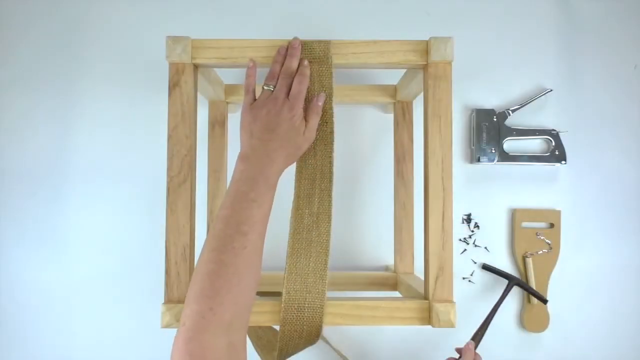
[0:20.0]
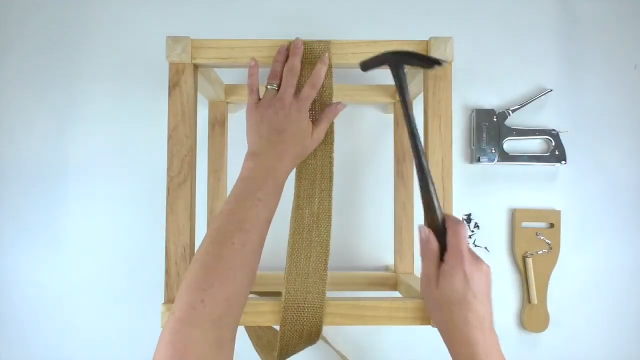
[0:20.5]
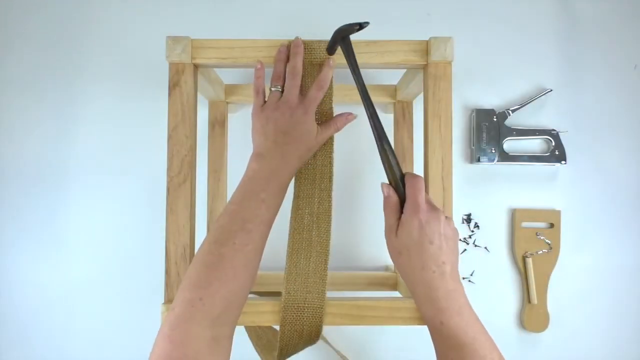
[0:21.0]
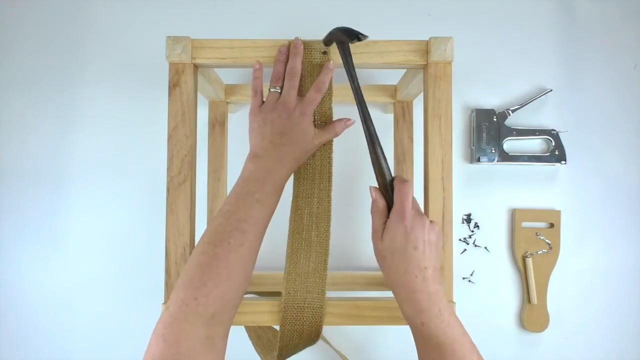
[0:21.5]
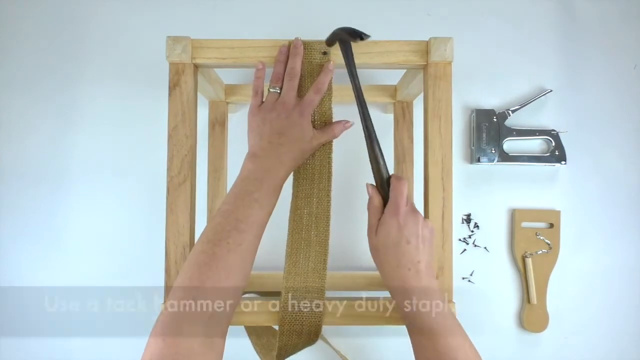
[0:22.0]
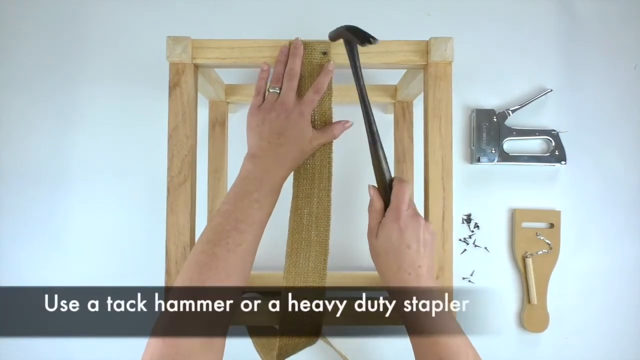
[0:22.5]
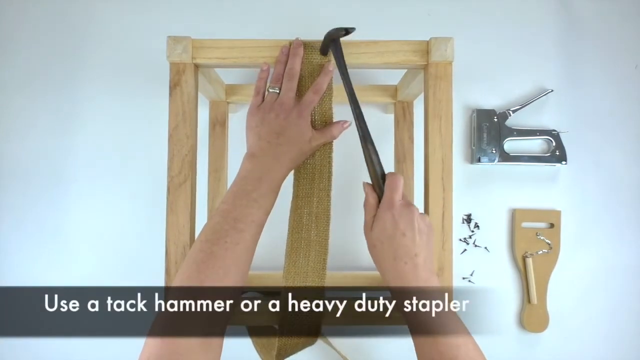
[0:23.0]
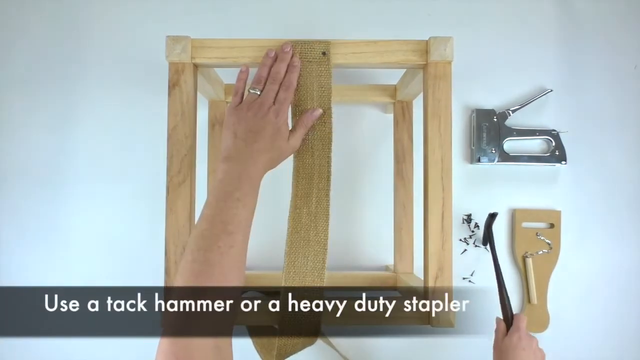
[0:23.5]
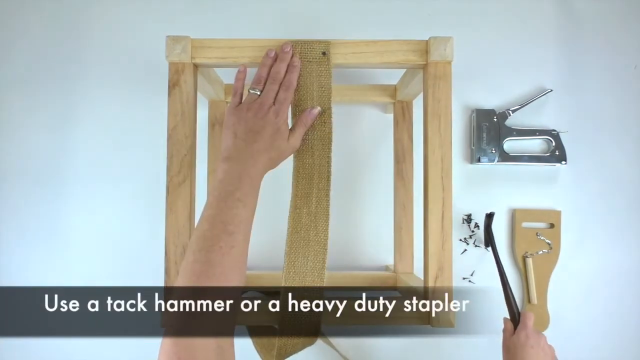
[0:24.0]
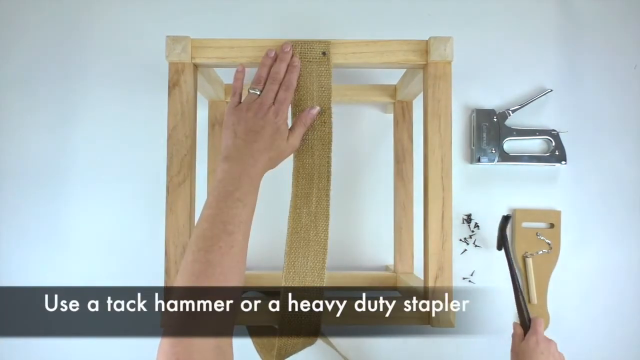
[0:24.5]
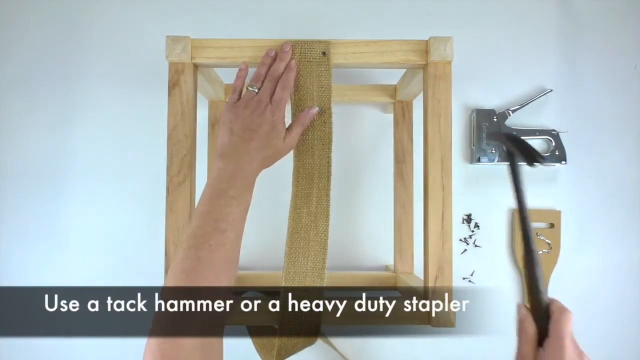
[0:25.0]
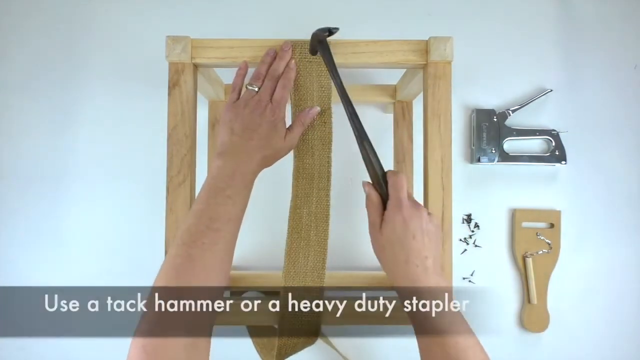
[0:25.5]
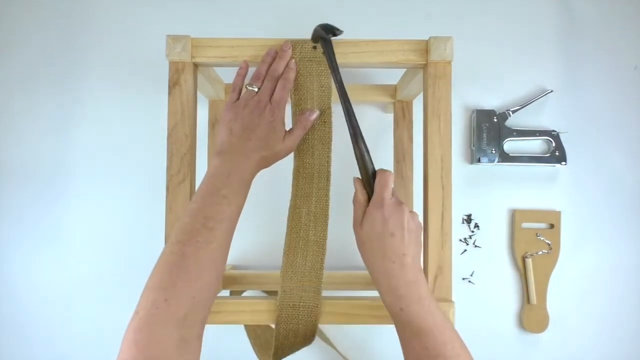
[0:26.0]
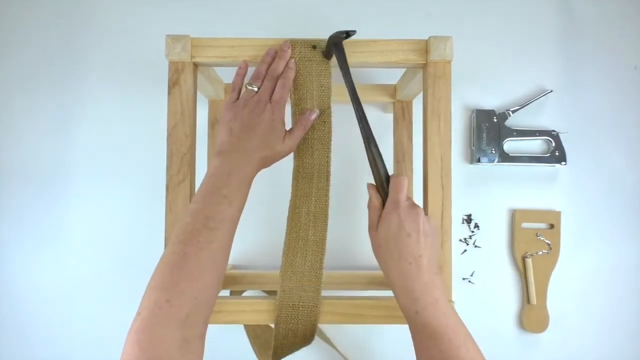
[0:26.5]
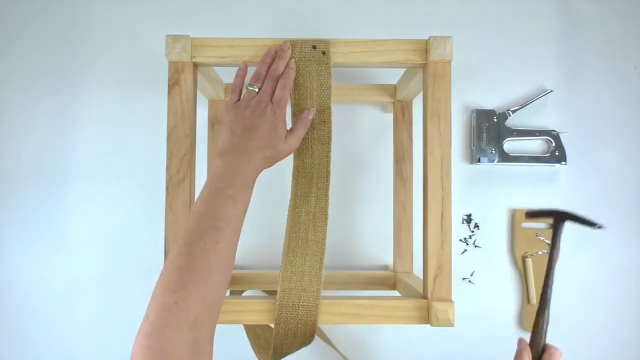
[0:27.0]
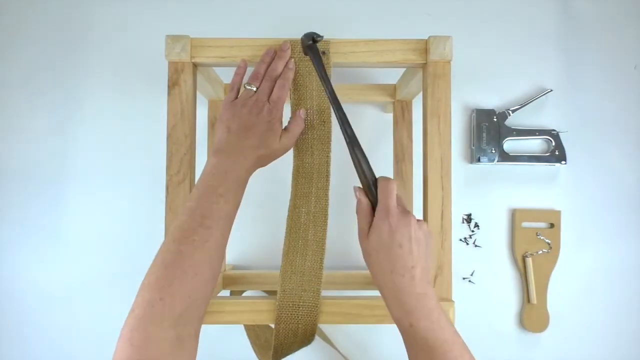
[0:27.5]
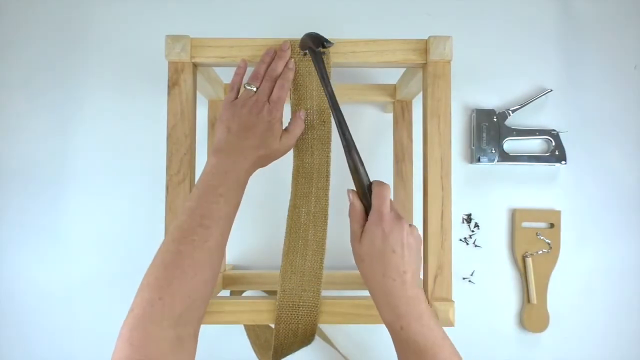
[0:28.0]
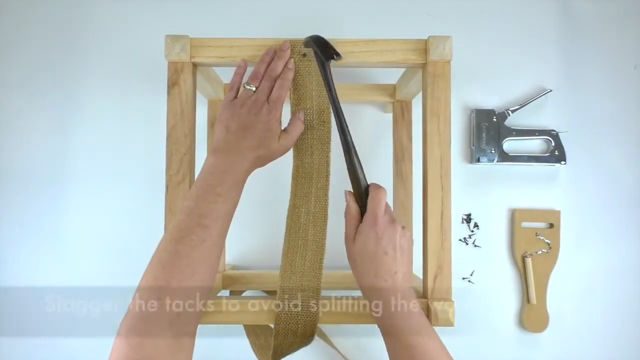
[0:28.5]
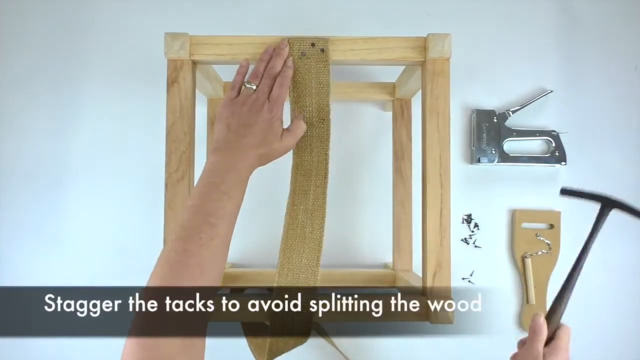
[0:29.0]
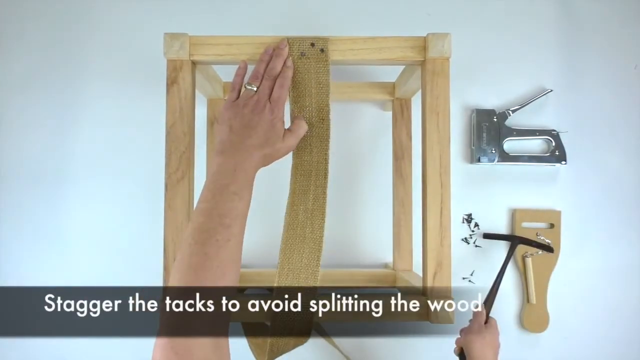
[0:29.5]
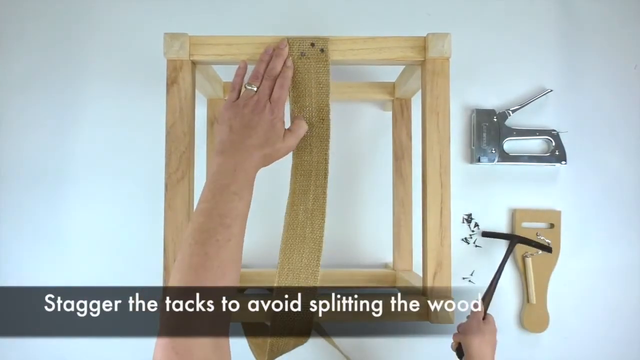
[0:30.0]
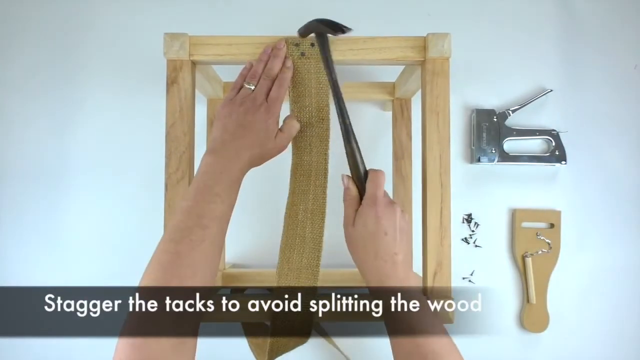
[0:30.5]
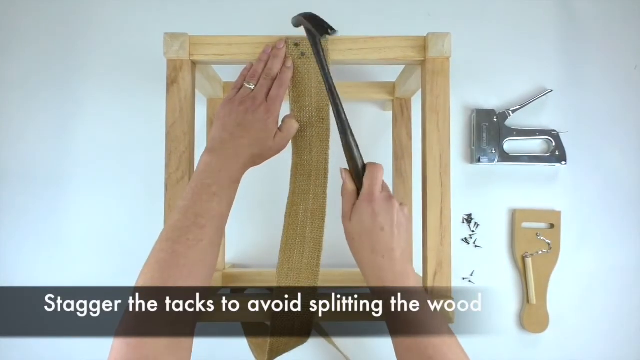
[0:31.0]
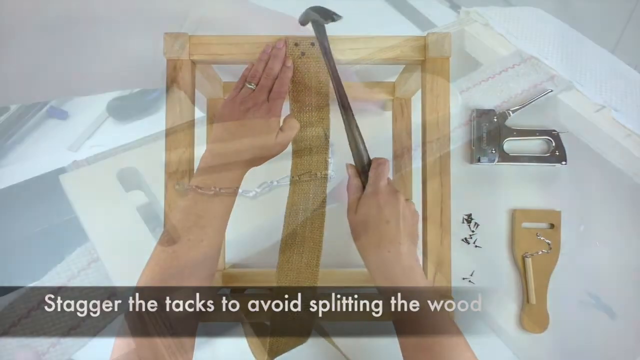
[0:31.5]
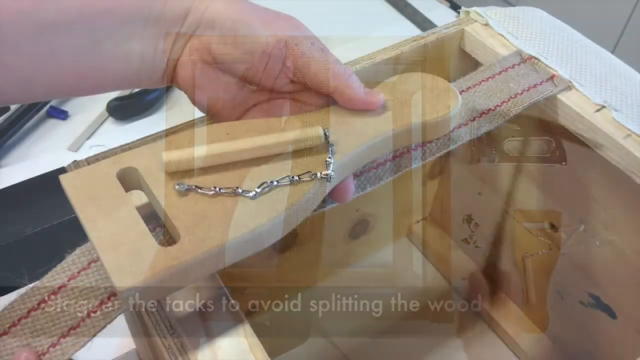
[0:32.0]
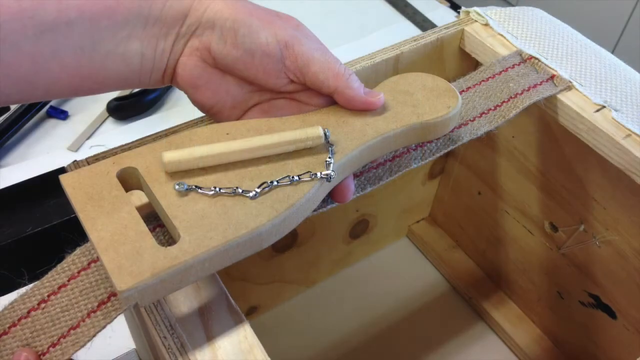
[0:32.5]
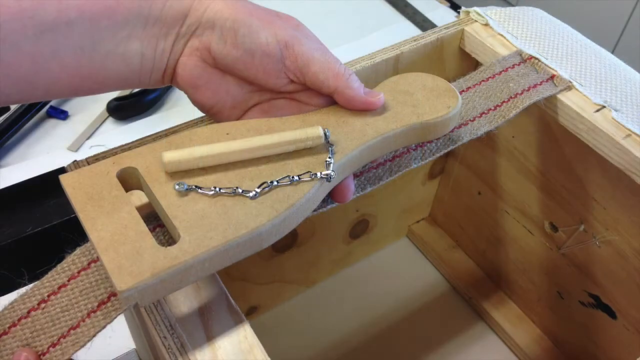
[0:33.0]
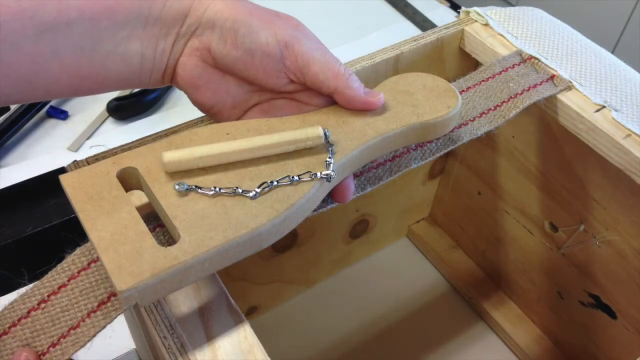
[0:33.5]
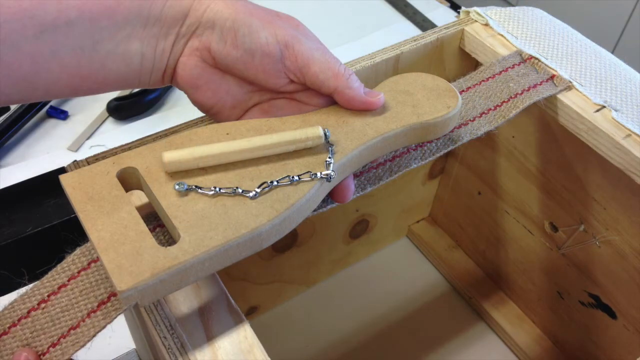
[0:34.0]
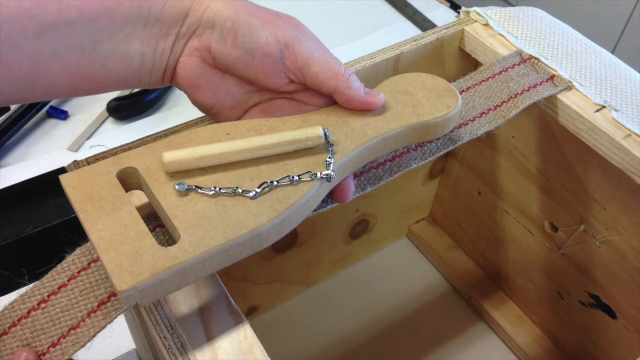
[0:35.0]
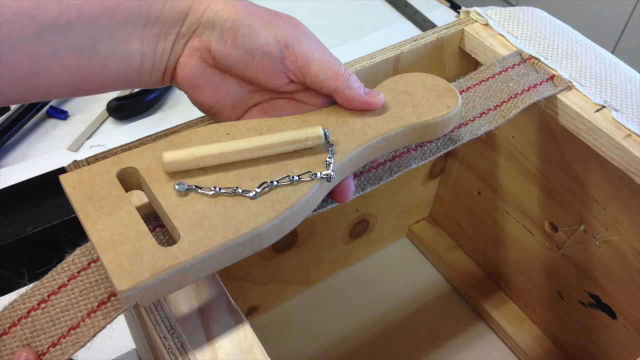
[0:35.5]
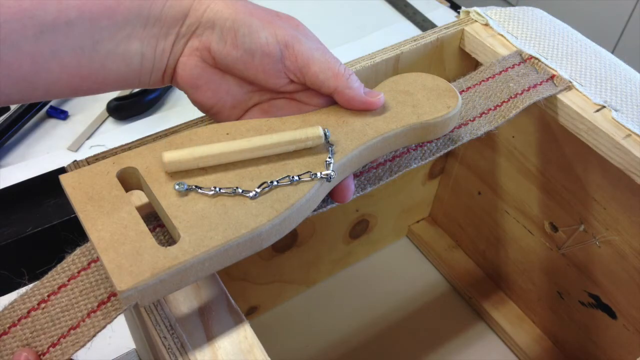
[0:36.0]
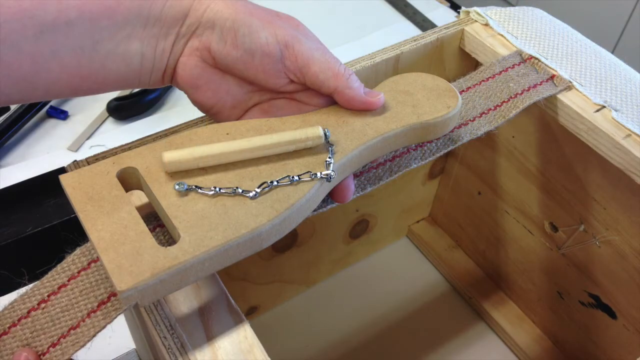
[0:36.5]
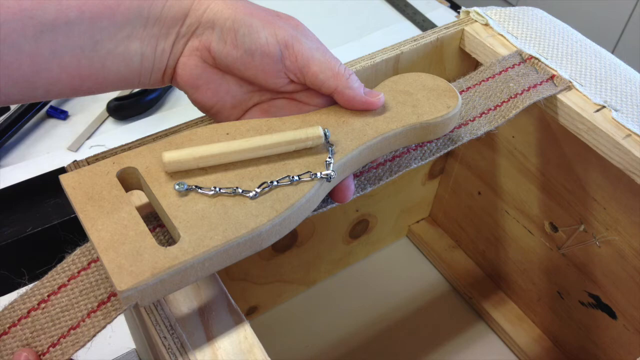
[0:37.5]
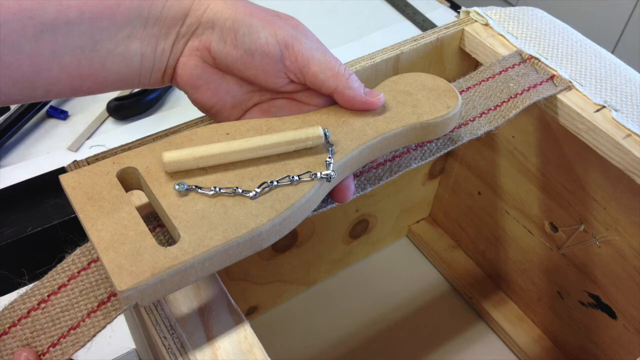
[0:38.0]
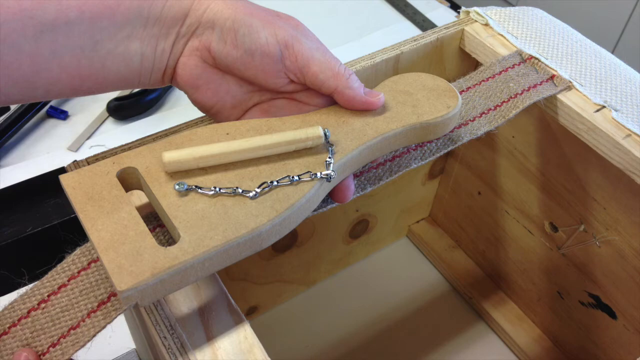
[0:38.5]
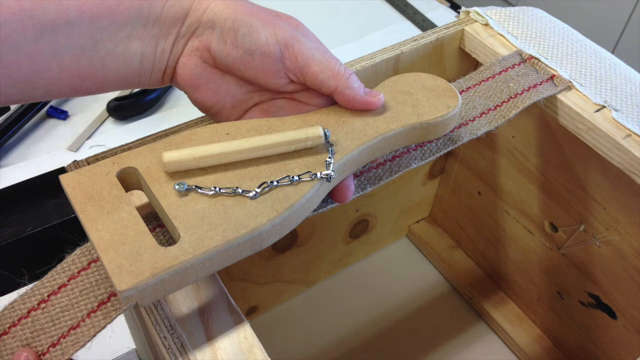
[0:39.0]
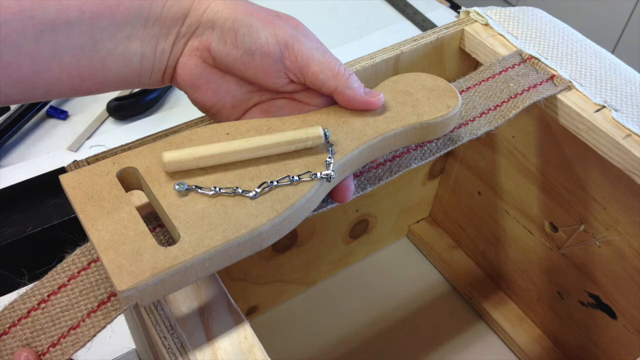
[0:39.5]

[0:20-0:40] Someone works on a wooden box, holding a hammer in one hand and going over what looks like some type of material on the box, hammering it in. Additional tools are on the surface below. The person hammers in some nails while text at the bottom of the screen reads "Use a tack hammer or a heavy-duty stapler." They continue hammering nails, and the text at the bottom changes to "Stagger the tacks to avoid splitting the wood." A hand then shows some sort of object with a chain on top of it, apparently holding it on top of the wooden box.